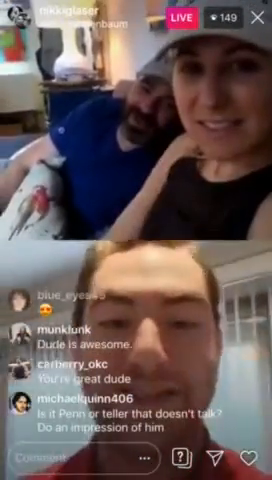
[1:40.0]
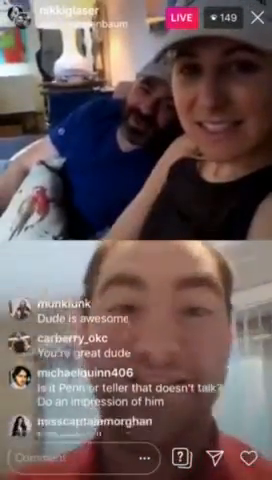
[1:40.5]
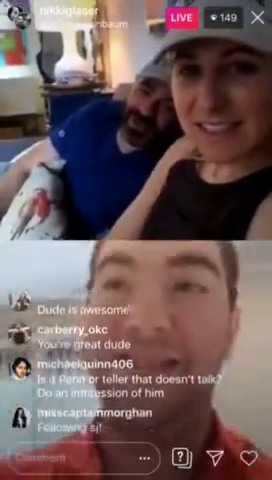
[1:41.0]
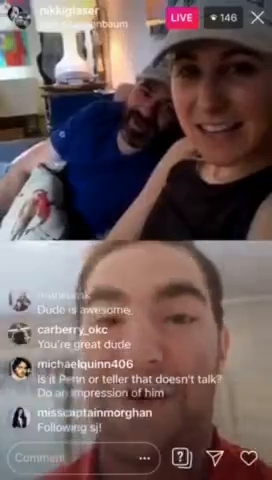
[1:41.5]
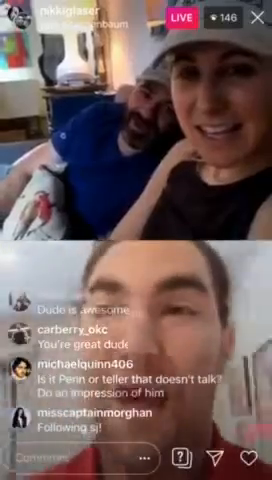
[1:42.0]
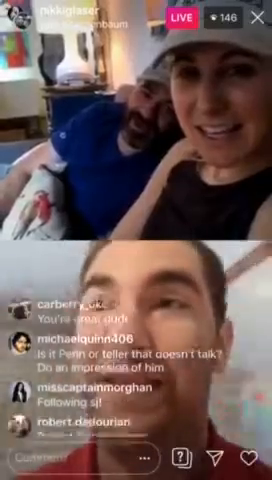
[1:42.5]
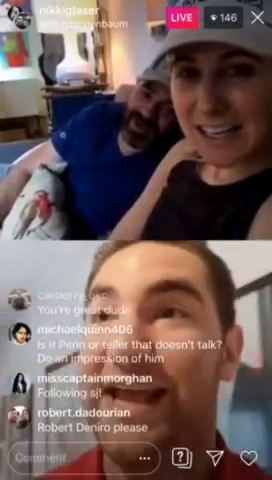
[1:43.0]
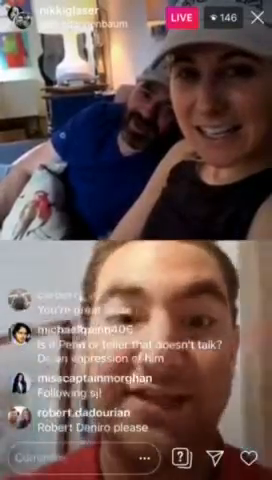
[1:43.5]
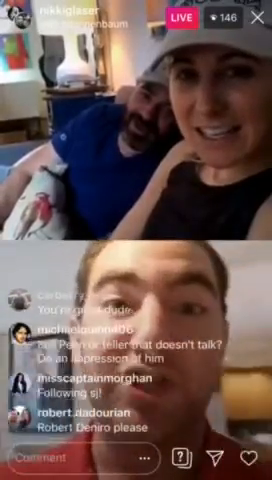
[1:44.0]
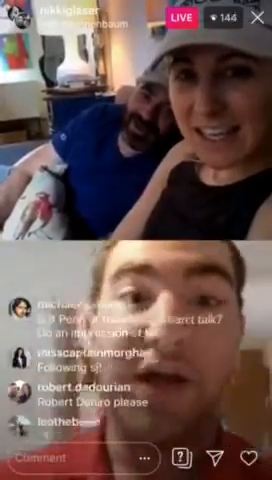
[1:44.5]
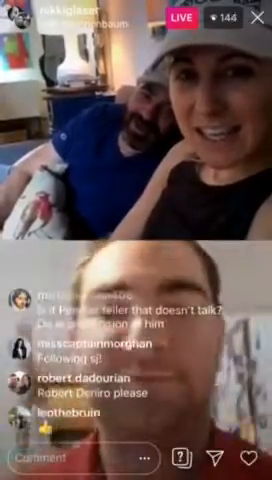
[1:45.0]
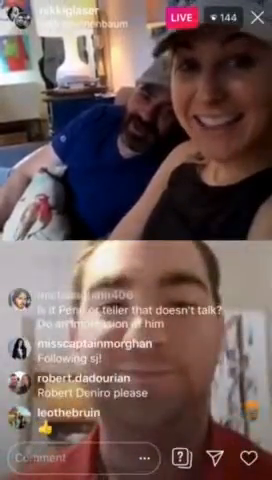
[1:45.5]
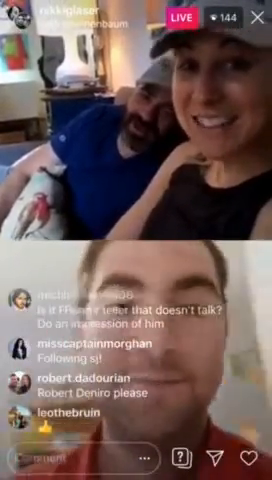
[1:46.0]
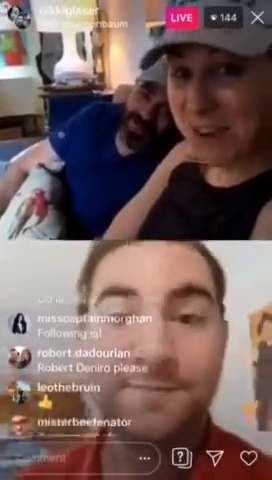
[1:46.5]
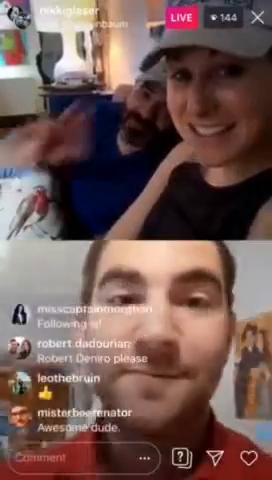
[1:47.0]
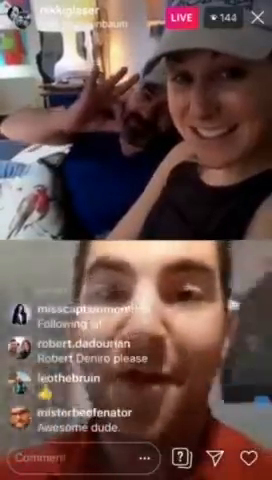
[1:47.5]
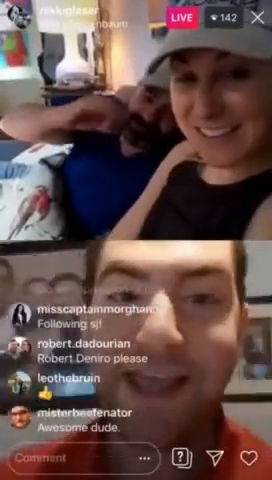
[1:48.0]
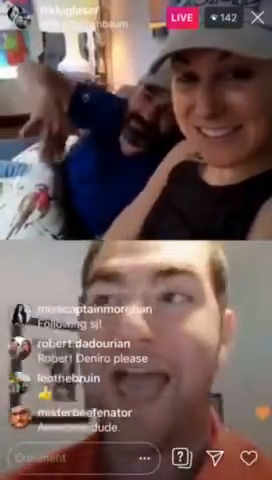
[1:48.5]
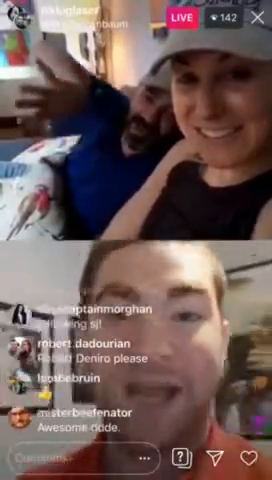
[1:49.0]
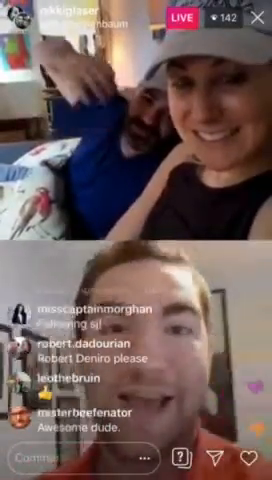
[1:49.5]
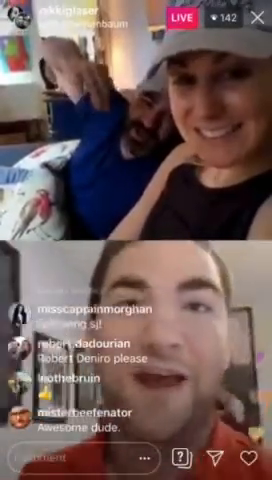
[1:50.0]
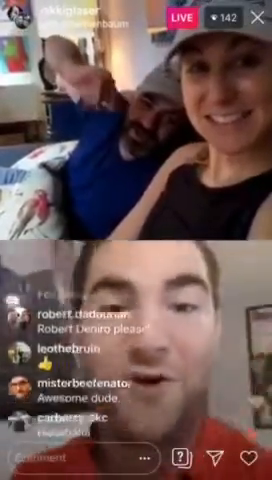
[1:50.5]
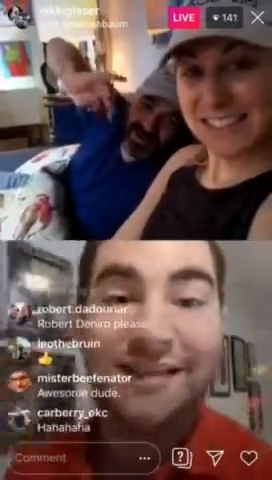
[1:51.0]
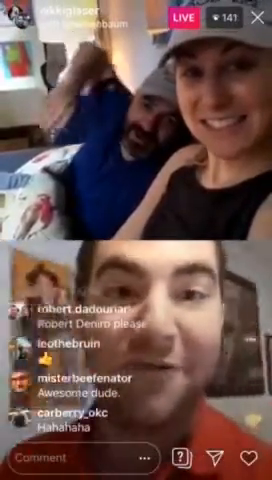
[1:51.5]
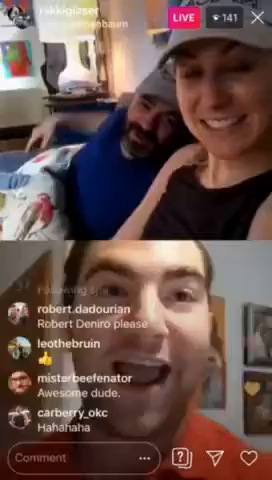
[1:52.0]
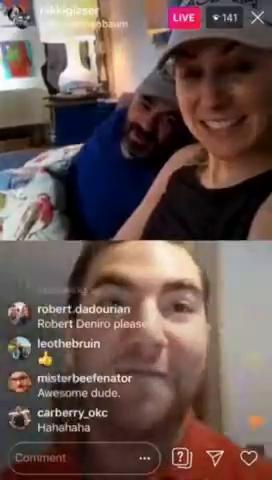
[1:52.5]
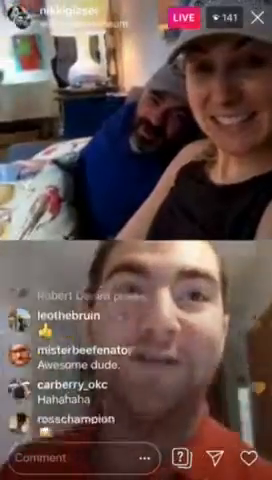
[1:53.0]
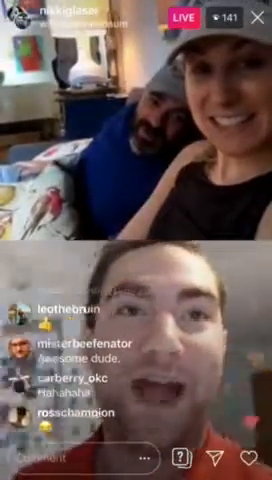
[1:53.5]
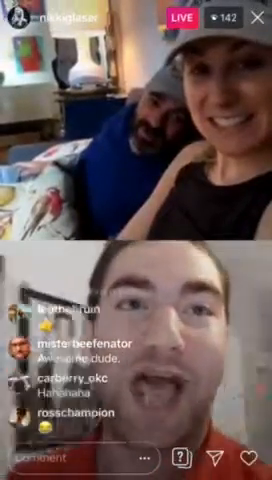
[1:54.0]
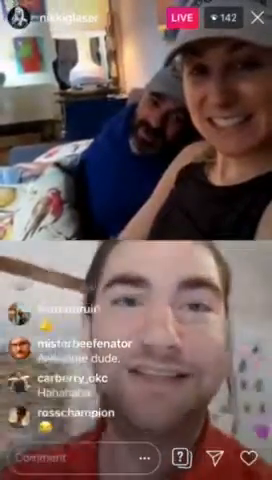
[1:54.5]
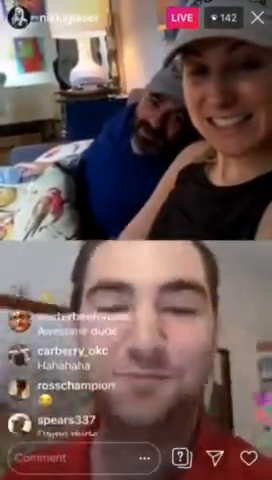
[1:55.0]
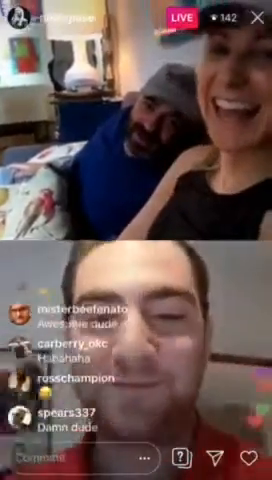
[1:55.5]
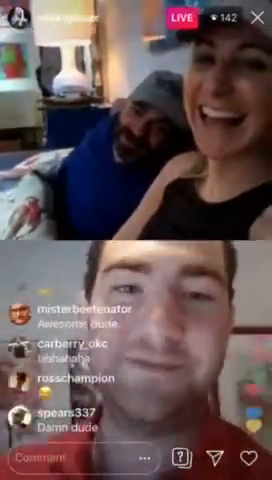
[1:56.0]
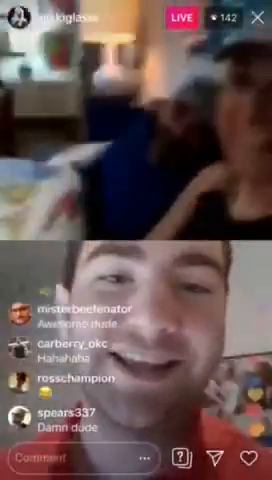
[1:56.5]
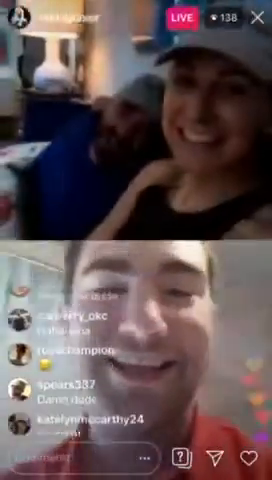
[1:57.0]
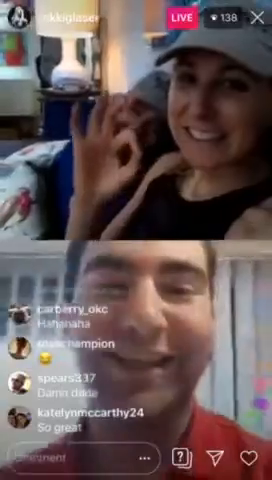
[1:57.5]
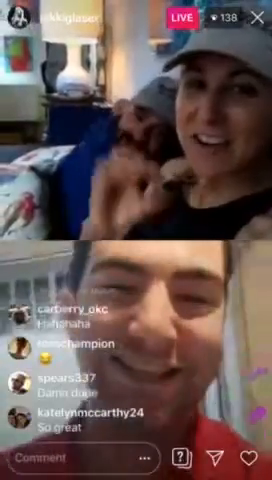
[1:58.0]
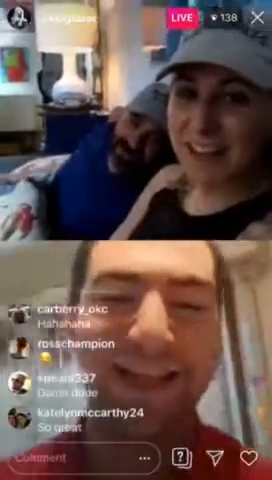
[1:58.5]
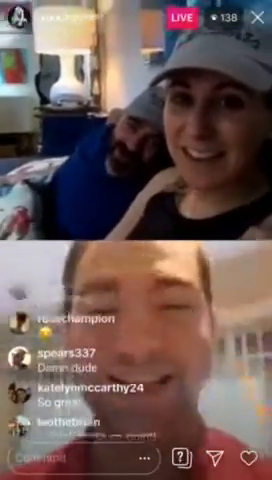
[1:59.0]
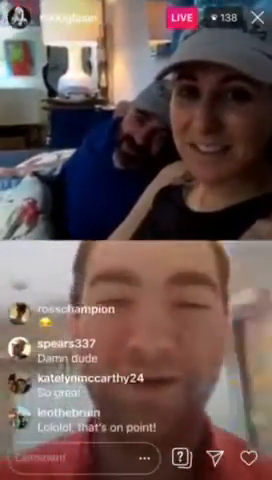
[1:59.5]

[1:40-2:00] The live stream is split between top and bottom, with numerous icons along the bottom edge and, to the left just above them, profile pictures and names with messages scrolling up as people chat. Along the top edge are icons showing the current viewer count, a red one showing the video is live, and another indicating it is being streamed by Nikki Glaser. In the top half, a man and a woman sit on a couch, the woman closest to the camera and the man next to her leaning towards her, with a desk with a computer behind them. In the bottom half, a man speaks while walking about the building he is in. The man in the top says something, moving his hand a bit. The man in the bottom says something, and the woman laughs, then makes an okay gesture with her hand.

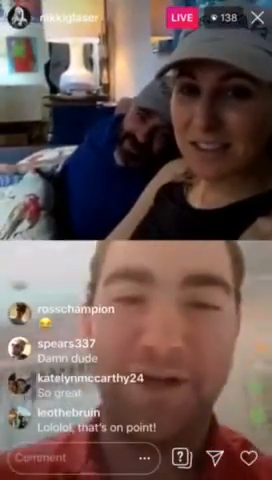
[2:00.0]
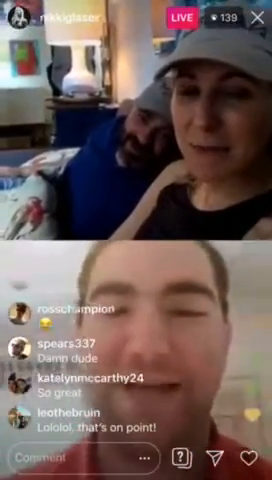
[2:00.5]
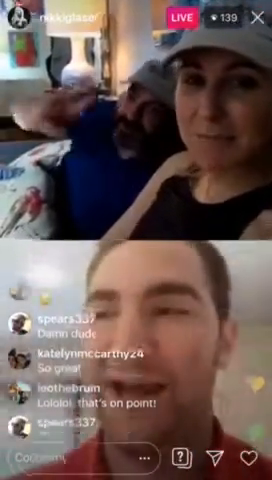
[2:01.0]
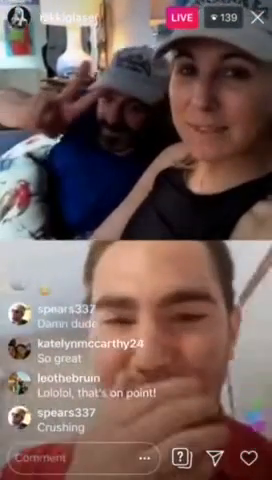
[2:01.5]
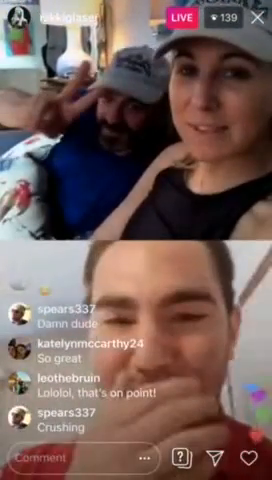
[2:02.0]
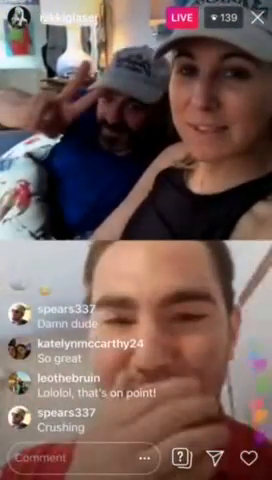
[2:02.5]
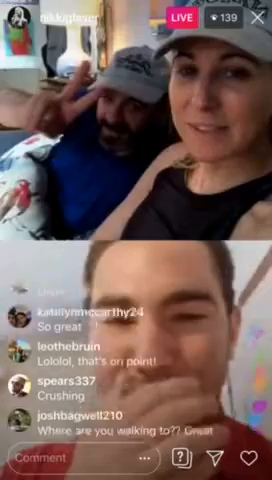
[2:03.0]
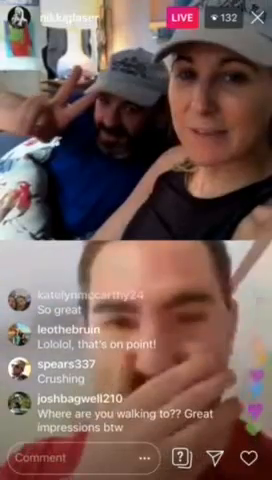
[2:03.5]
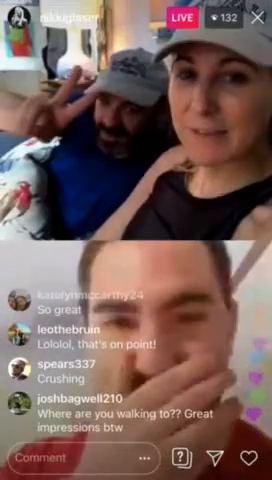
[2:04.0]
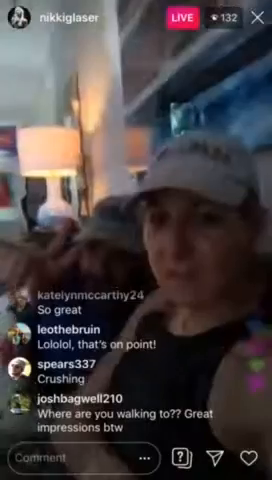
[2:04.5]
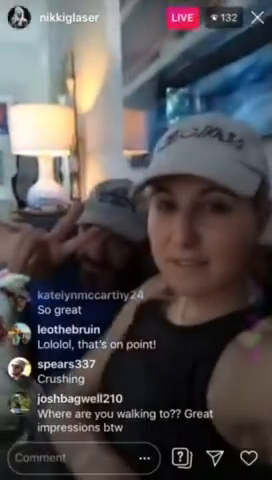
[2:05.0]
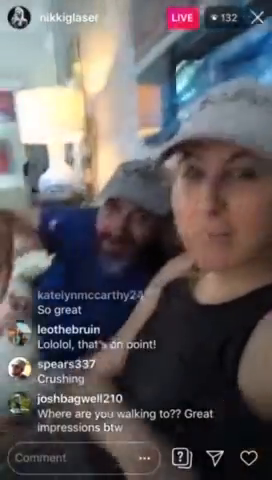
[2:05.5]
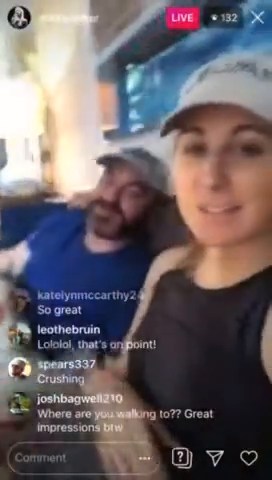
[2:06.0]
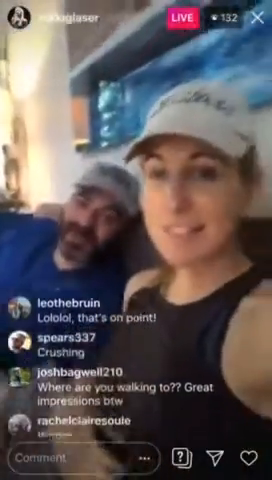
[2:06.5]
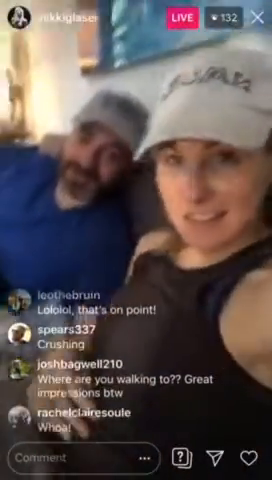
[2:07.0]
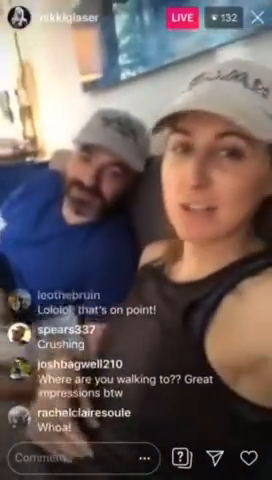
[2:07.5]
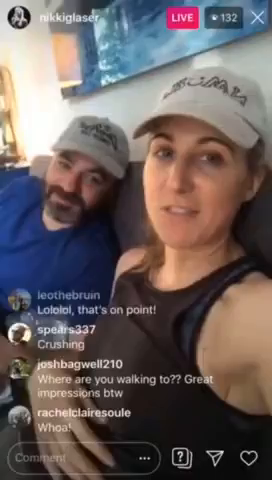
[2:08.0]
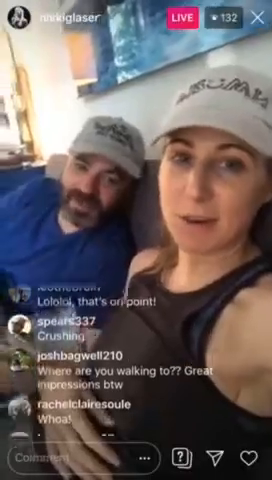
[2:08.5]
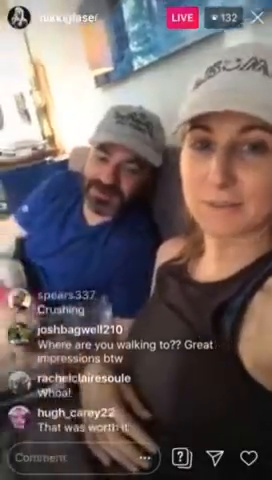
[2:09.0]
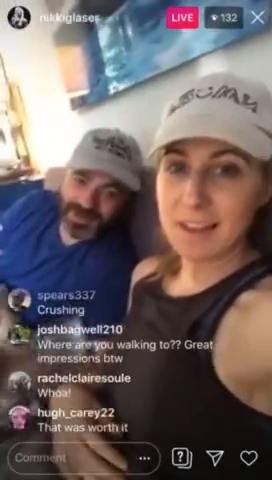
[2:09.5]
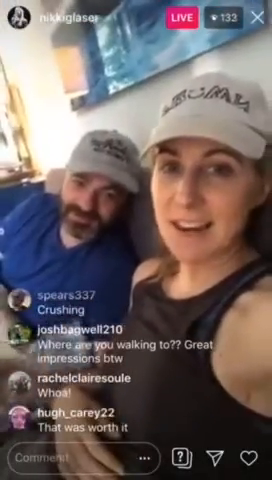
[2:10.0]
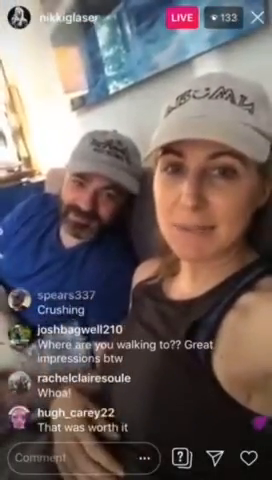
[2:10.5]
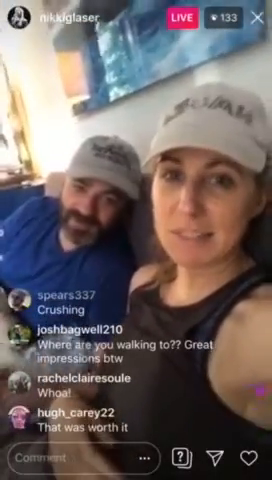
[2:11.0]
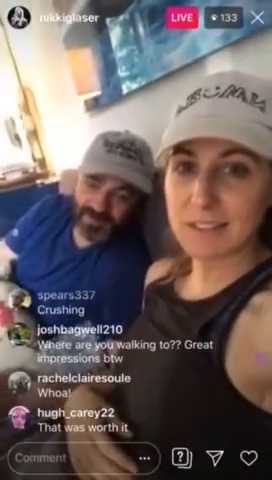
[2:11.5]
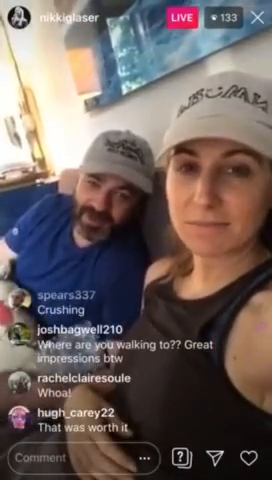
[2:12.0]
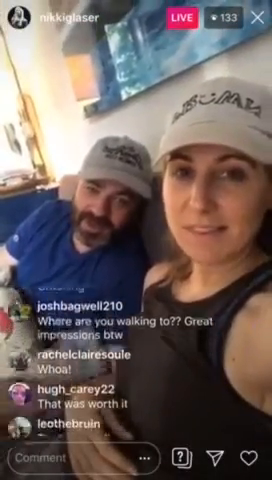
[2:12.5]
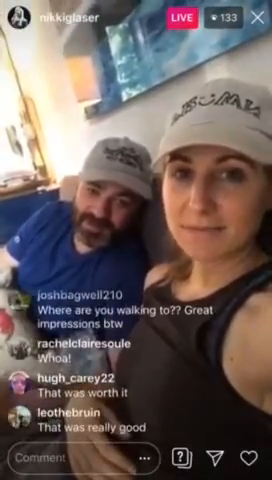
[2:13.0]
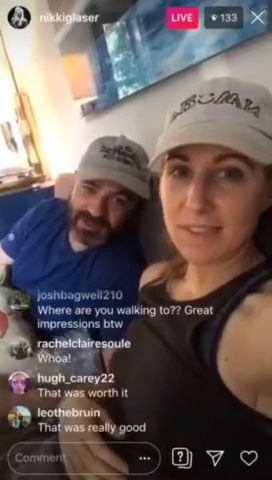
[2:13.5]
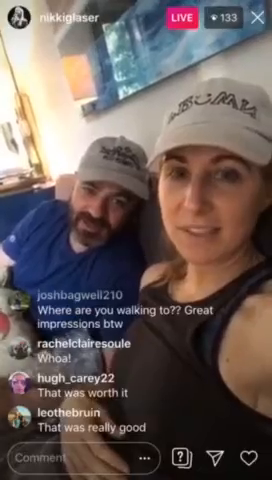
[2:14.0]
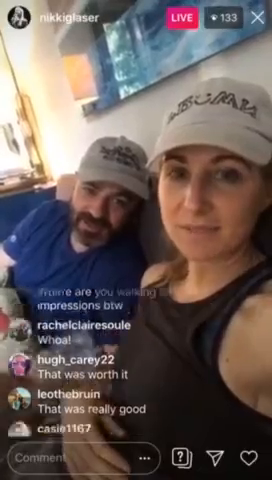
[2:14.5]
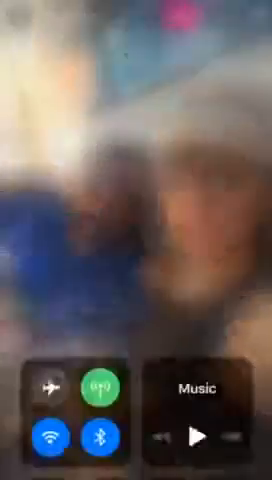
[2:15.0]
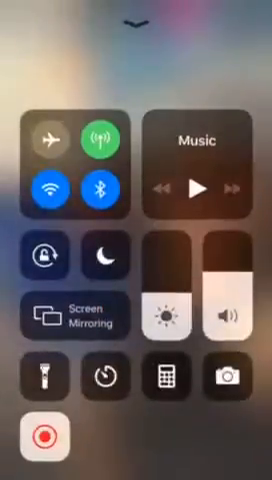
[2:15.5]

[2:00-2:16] The live stream is split between top and bottom, with numerous icons along the top and bottom edges. In the bottom half, just above the icons, profile pictures and names with messages scroll up. The top icons show the current viewer count and indicate the video is live and being streamed by Nikki Glaser. In the top half, a woman and a man sit on a couch, the woman closest to the camera and the man next to her leaning towards her and holding up two fingers, with a desk with a computer behind them. In the bottom half, a man briefly covers his mouth. The video then cuts to full screen showing just the man and the woman. The woman rotates the camera a bit so the desk is no longer visible, and she speaks to the camera while the man speaks occasionally.